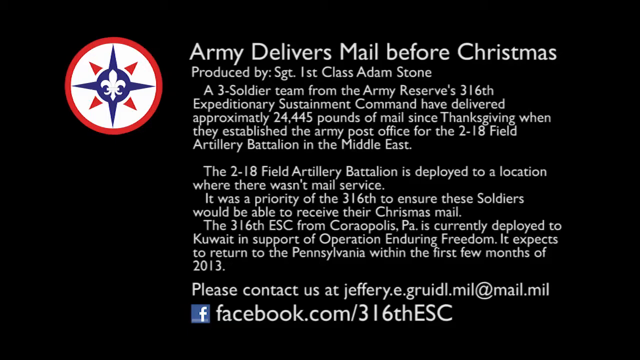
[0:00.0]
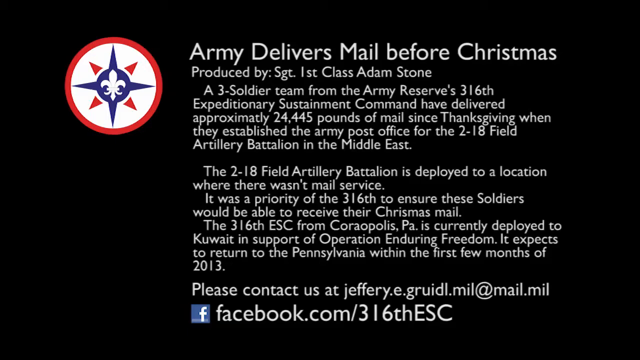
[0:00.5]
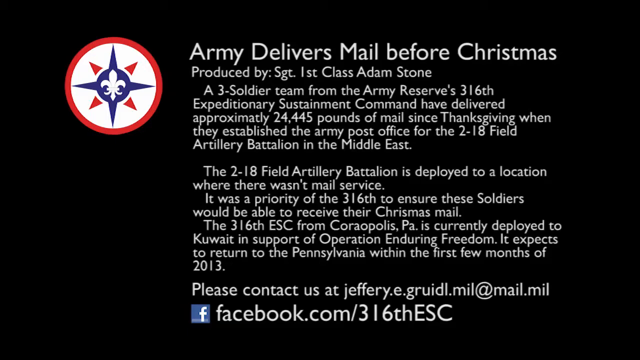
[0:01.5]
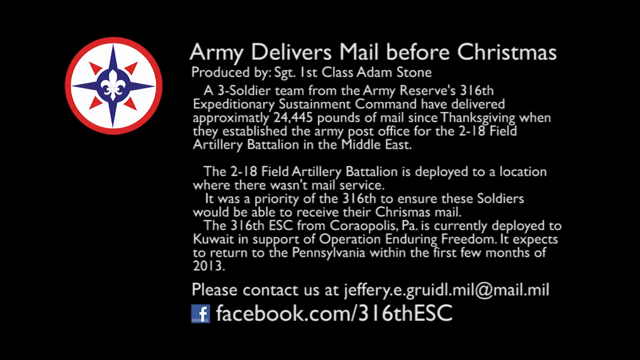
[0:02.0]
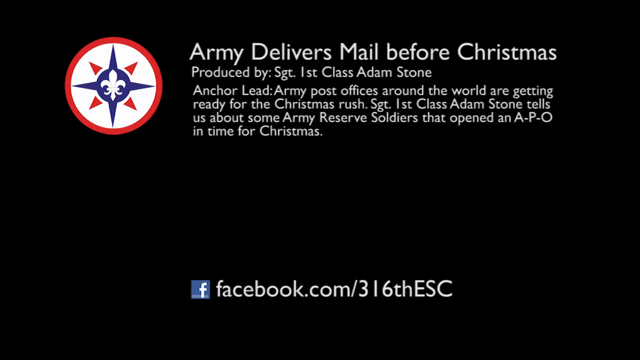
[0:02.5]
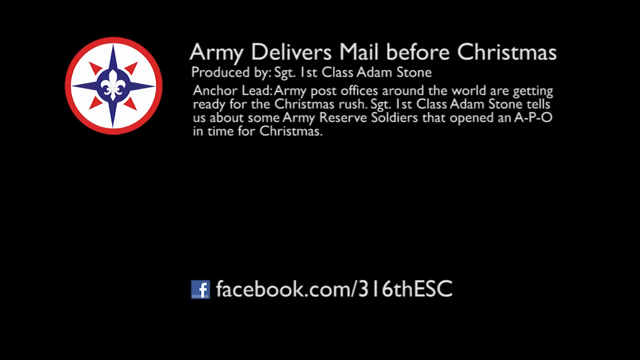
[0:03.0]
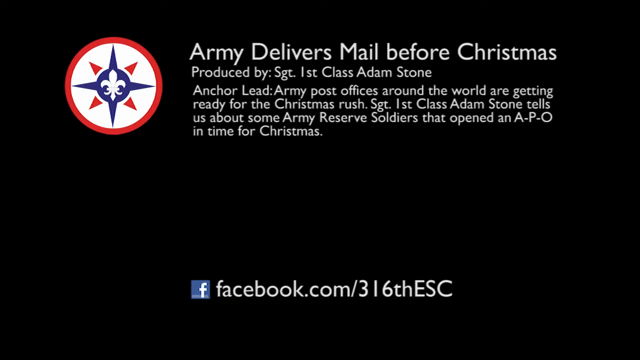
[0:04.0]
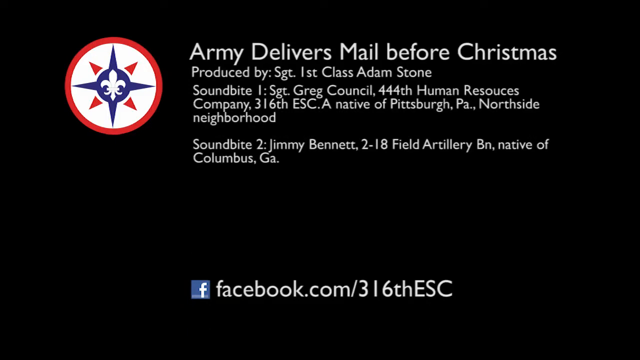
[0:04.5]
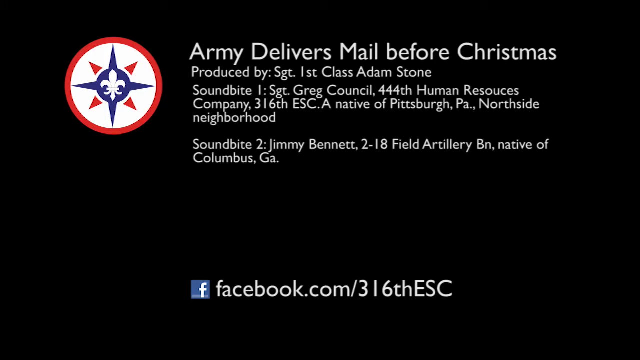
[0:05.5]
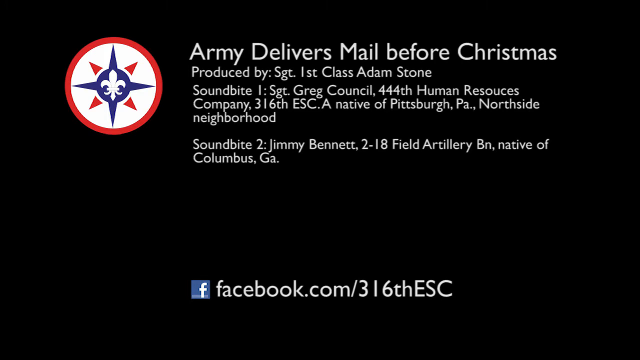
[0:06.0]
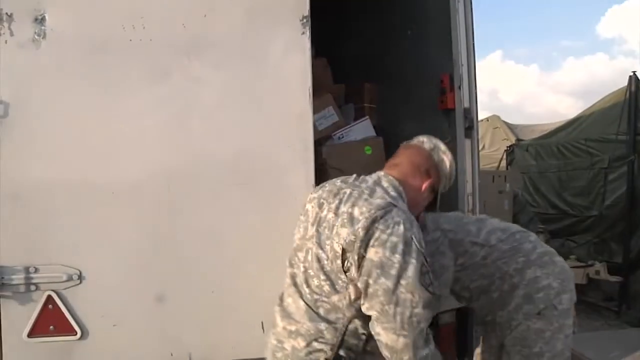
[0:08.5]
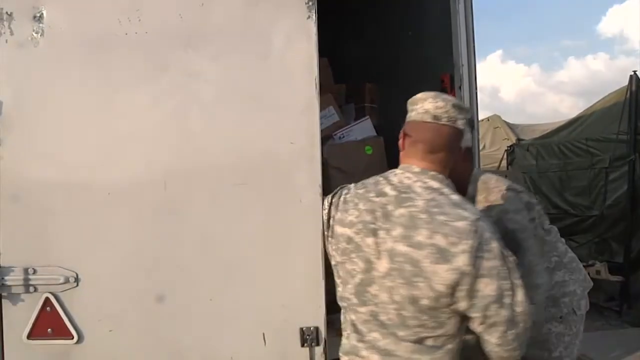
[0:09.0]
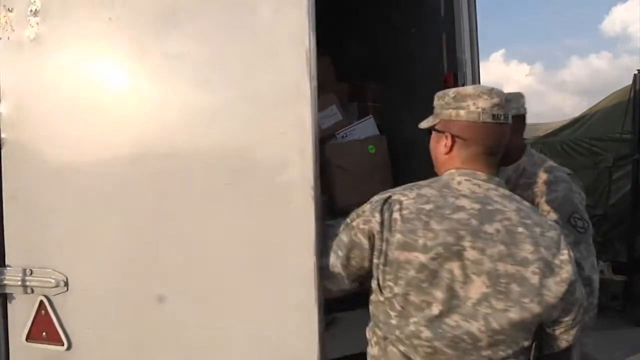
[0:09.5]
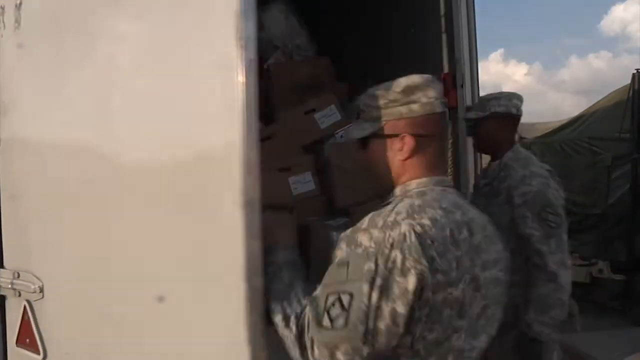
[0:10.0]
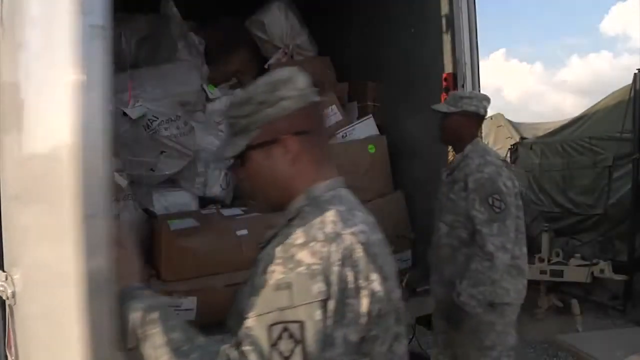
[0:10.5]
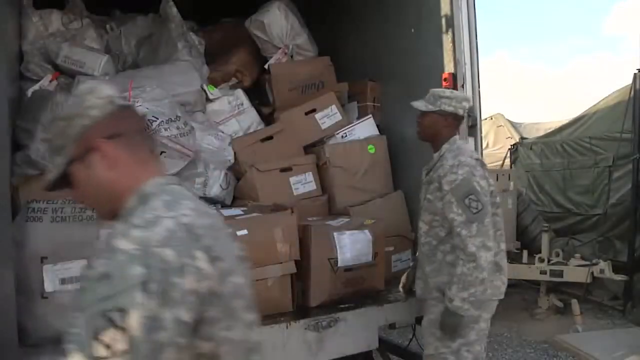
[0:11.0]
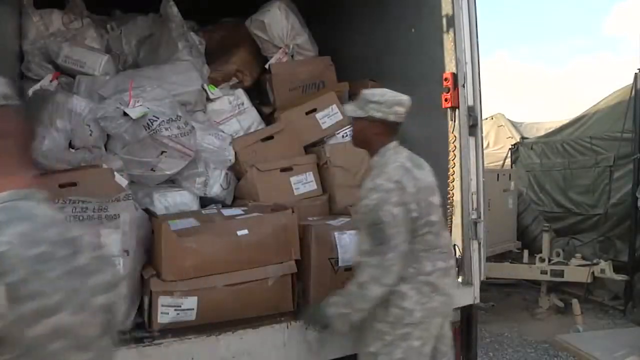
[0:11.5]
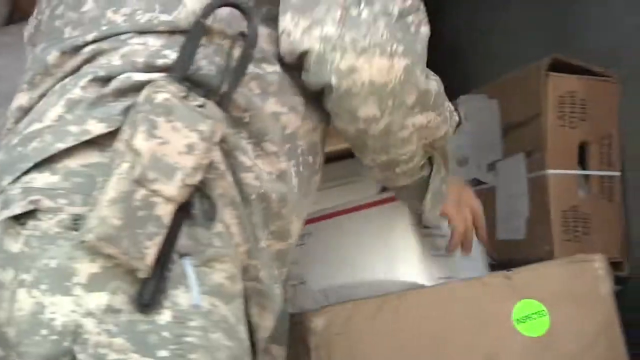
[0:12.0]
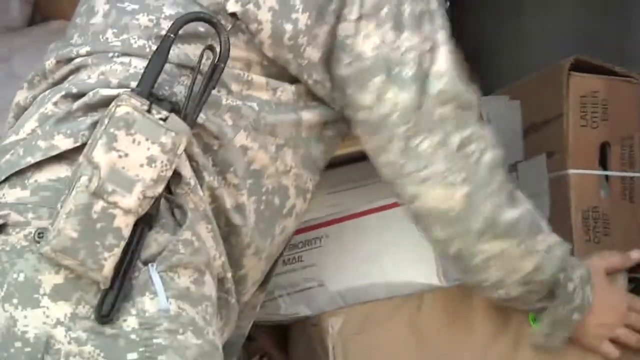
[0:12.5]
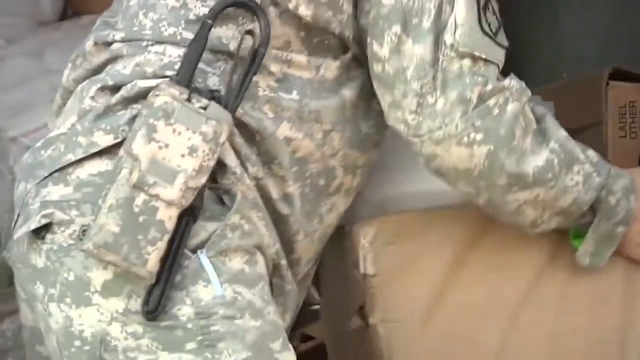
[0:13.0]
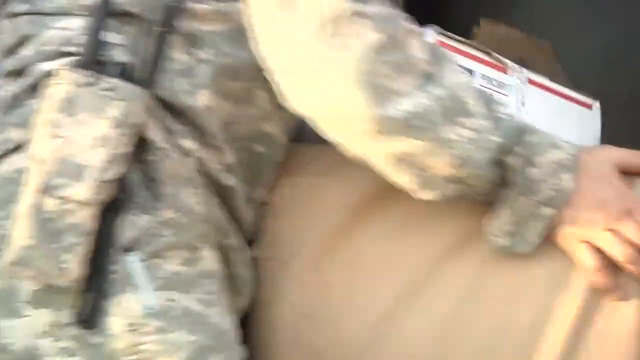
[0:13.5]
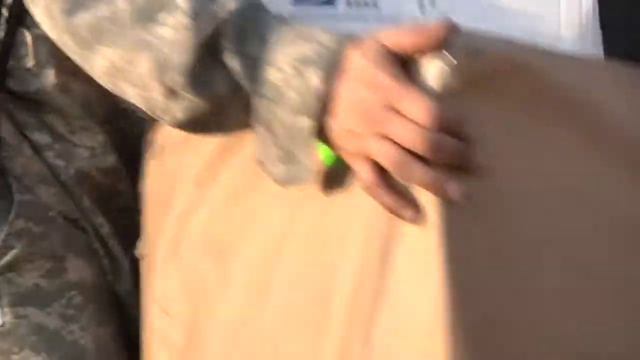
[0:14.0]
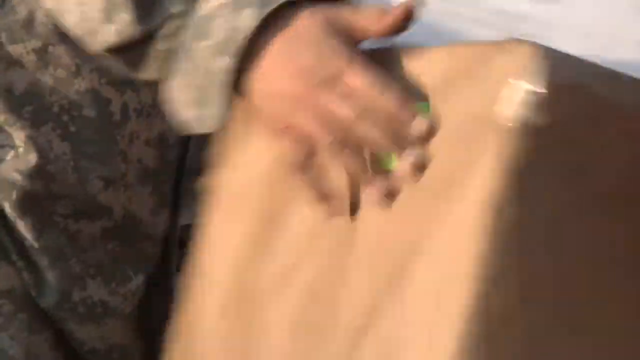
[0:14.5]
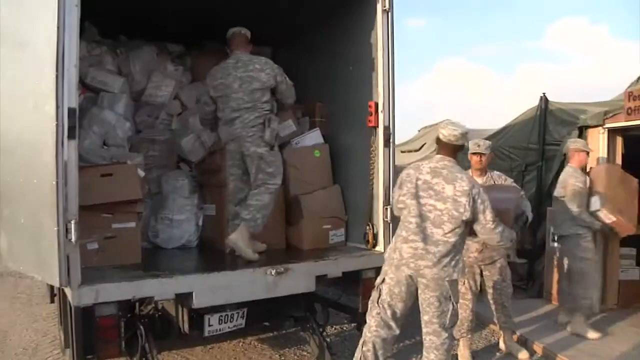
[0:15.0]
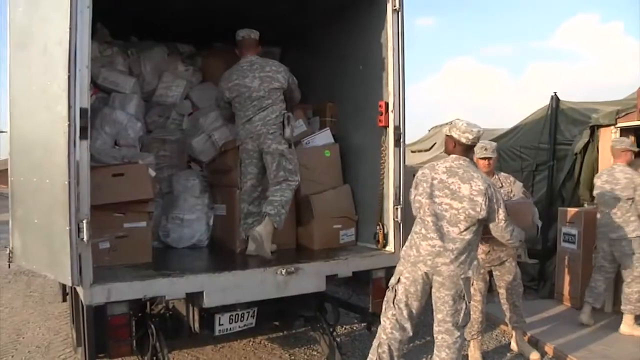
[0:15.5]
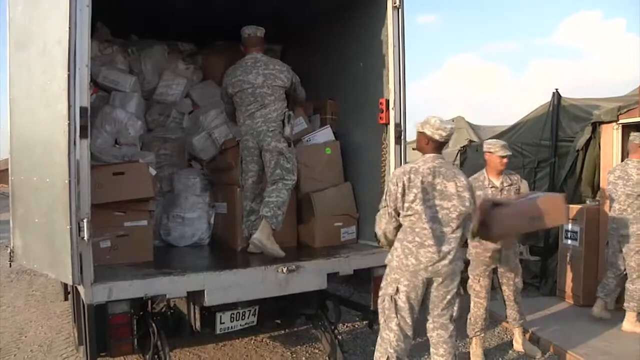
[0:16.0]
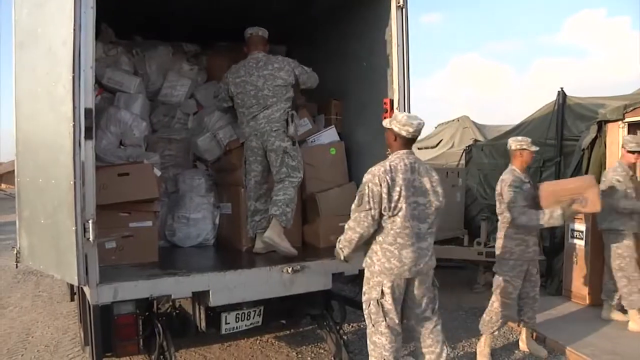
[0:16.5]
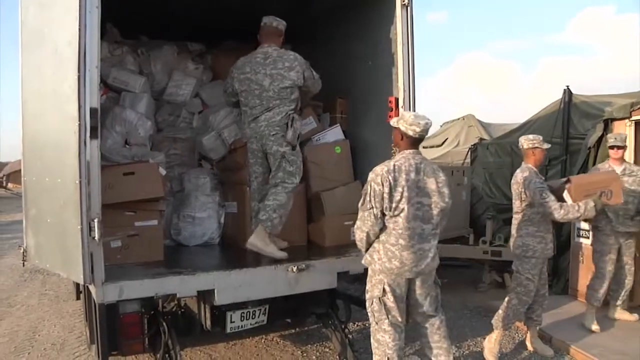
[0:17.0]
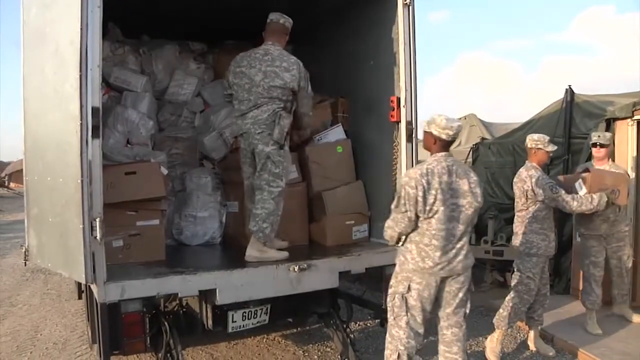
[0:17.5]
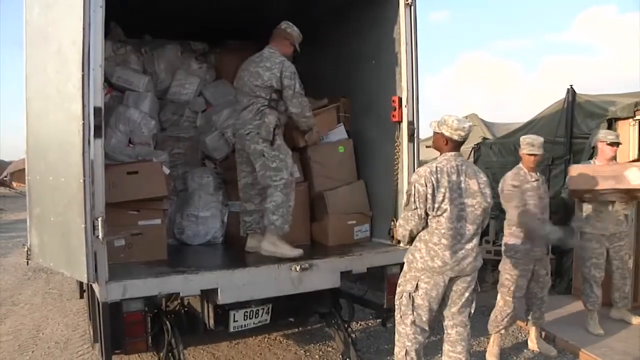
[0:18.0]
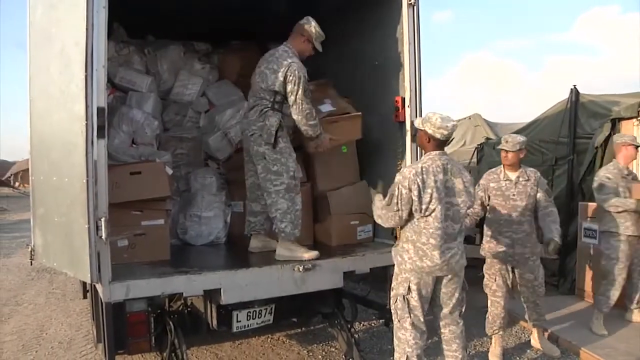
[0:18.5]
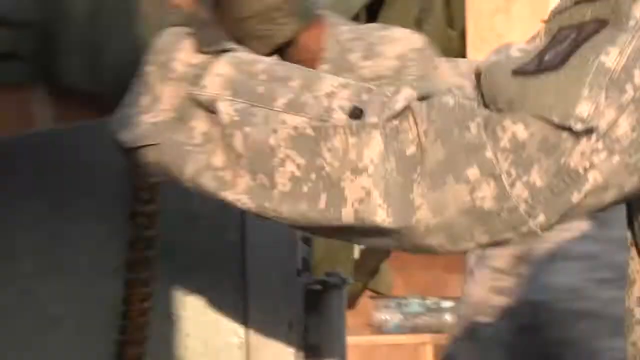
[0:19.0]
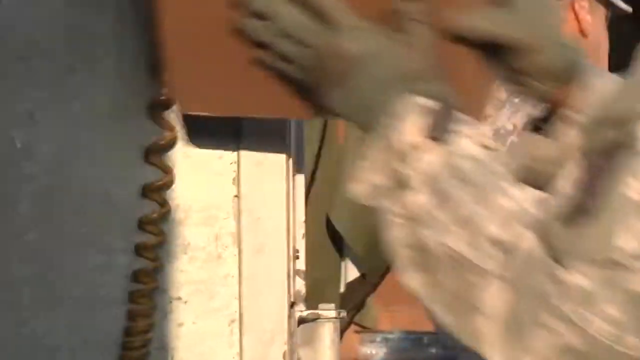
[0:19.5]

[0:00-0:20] White text on the screen reads: "Army Delivers Mail before Christmas Produced by: Sgt. 1st Class Adam Stone A 3-soldier team from the Army Reserve's 316th Expeditionary Sustainment Command have delivered approximately 24,445 pounds of mail since Thanksgiving, when they established the army post office for the 2-18 Field Artillery Battalion in the Middle East. The 2-18 Field Artillery Battalion is deployed to a location where there wasn't mail service. It was a priority of the 316th to ensure these Soldiers would be able to receive their Christmas mail. The 316th ESC from Coraopolis, Pa. is currently deployed to Kuwait in support of Operation Enduring Freedom. It expects to return to the Pennsylvania within the first few months of 2013." At the bottom of the screen is written "Please contact us at jeffery.e.gruidl.mil@mail.mil", and below this, "facebook.com/316thESC". There is a white circle with a red border, containing a star shape in the middle with red triangles between the star's points. The scene then changes to a group of uniformed soldiers offloading boxes from a truck.